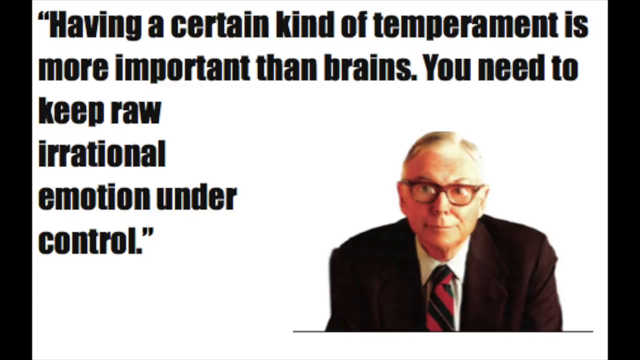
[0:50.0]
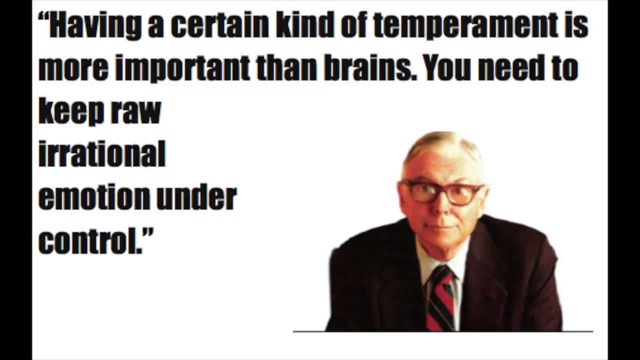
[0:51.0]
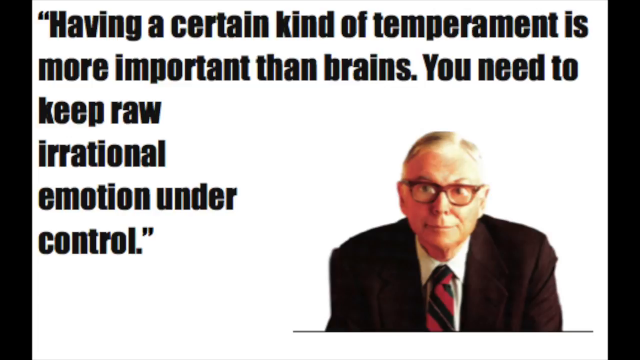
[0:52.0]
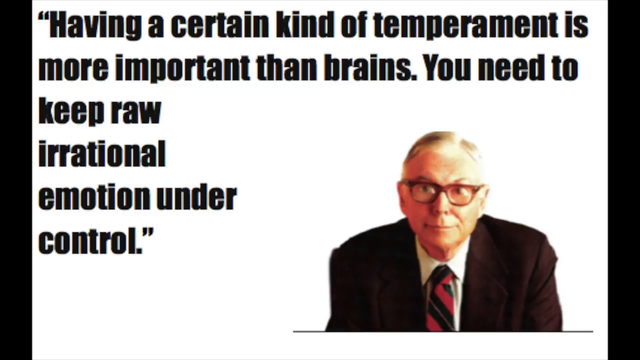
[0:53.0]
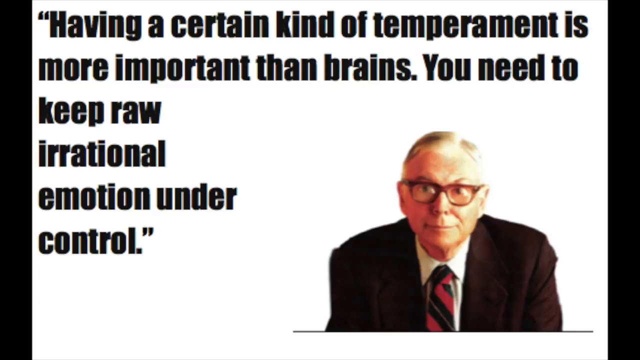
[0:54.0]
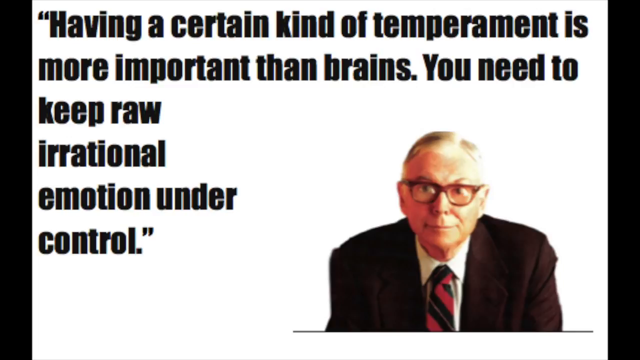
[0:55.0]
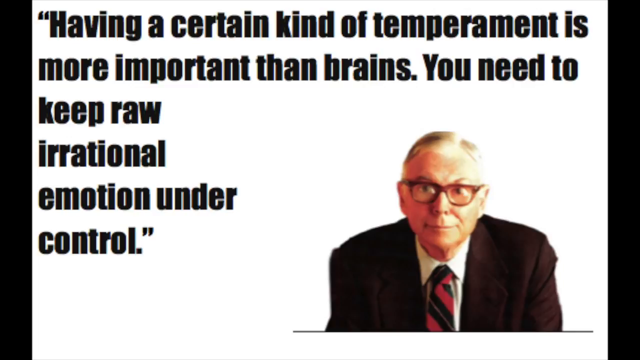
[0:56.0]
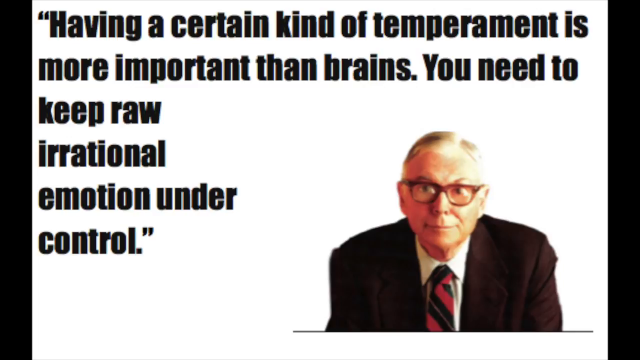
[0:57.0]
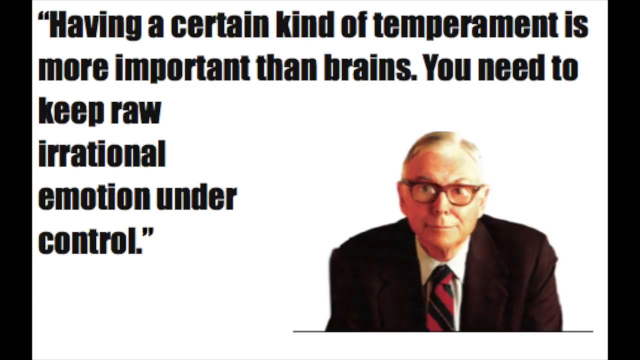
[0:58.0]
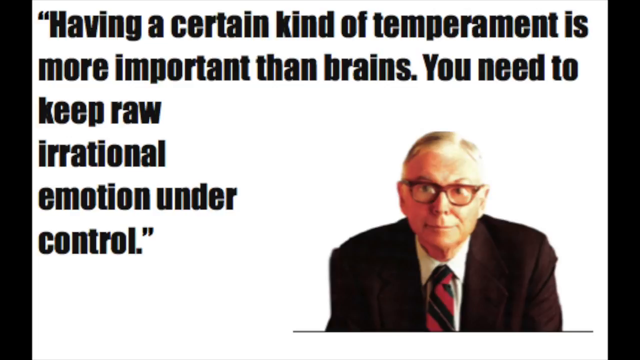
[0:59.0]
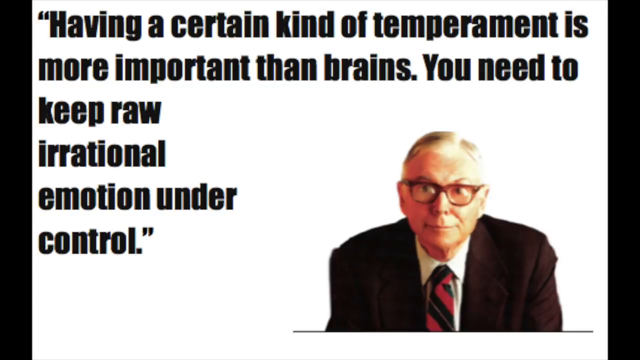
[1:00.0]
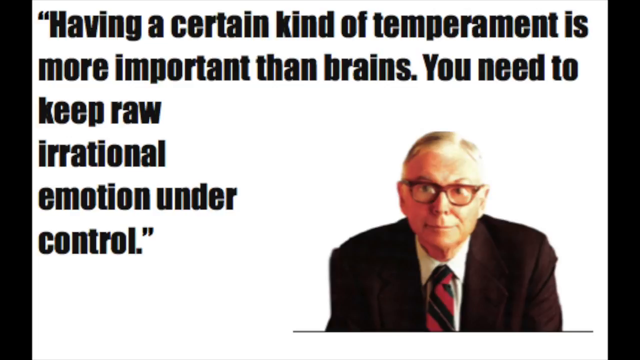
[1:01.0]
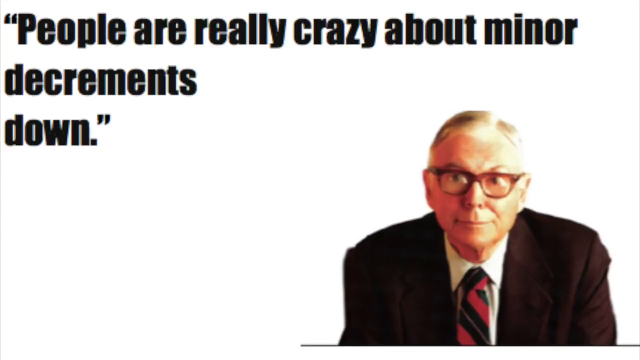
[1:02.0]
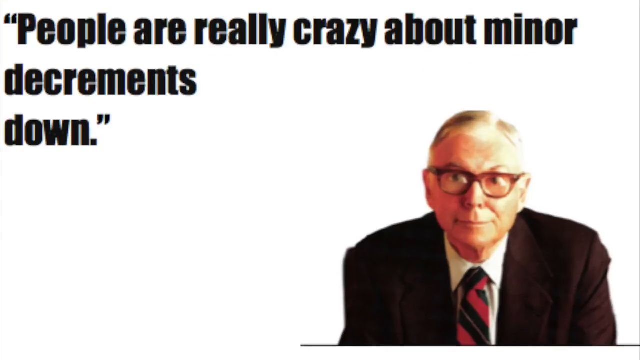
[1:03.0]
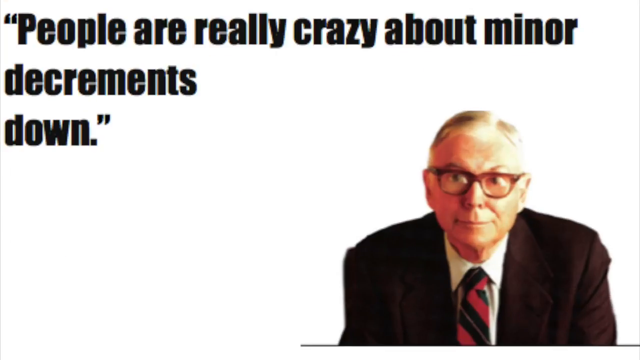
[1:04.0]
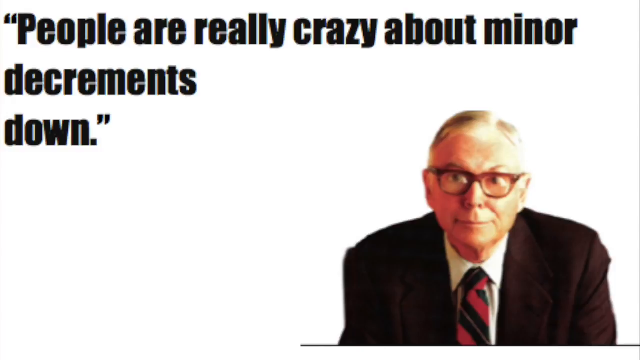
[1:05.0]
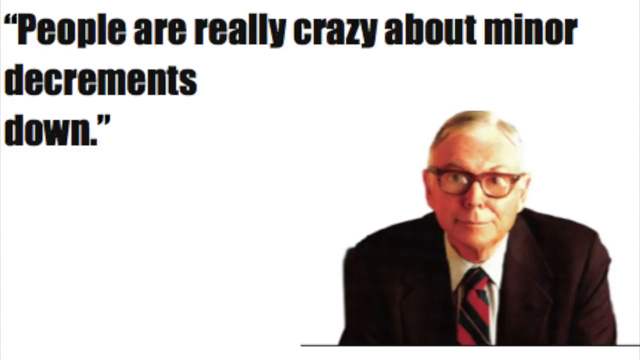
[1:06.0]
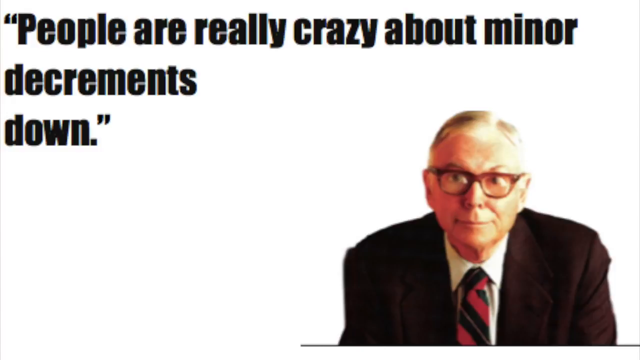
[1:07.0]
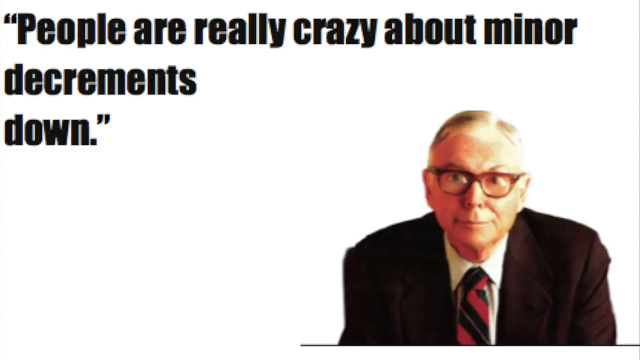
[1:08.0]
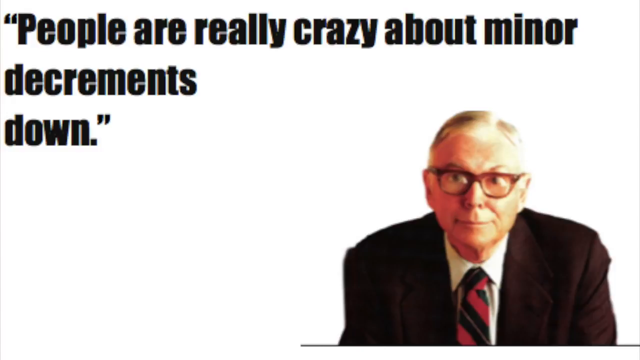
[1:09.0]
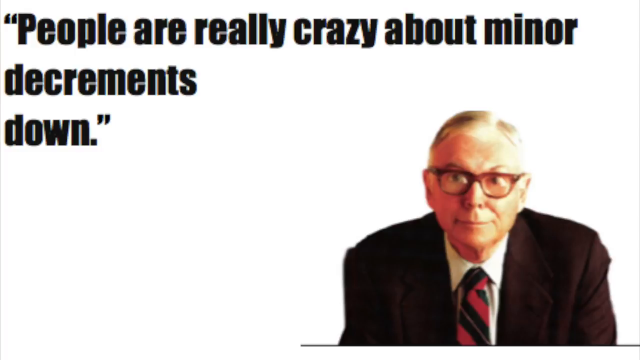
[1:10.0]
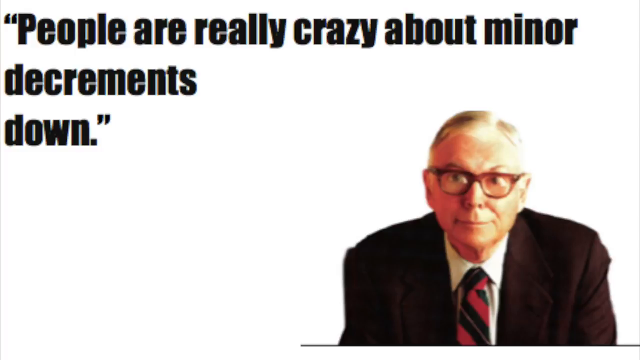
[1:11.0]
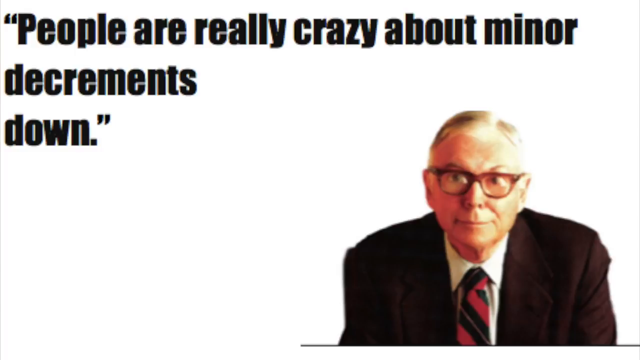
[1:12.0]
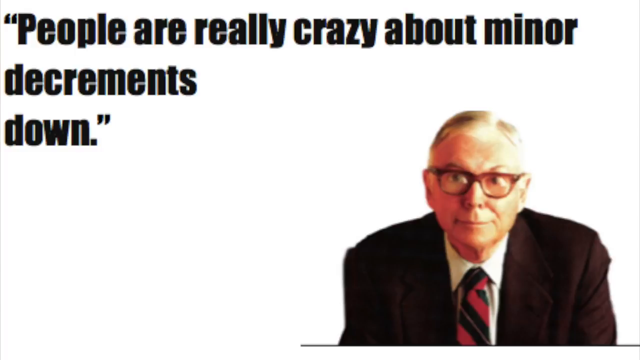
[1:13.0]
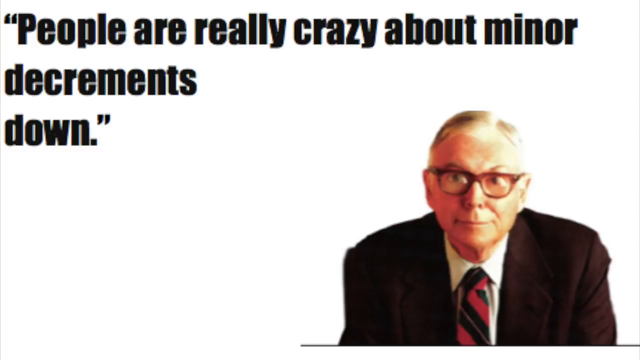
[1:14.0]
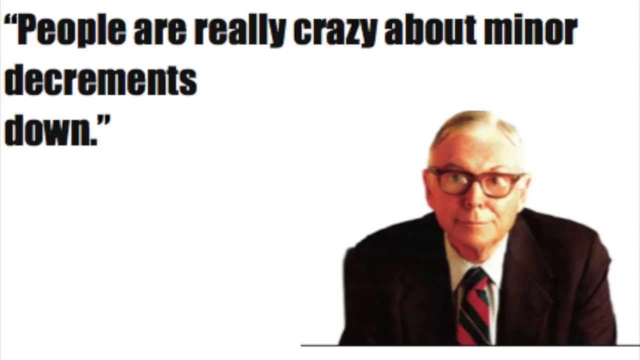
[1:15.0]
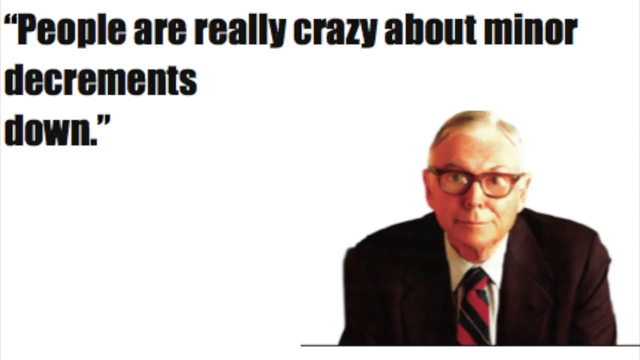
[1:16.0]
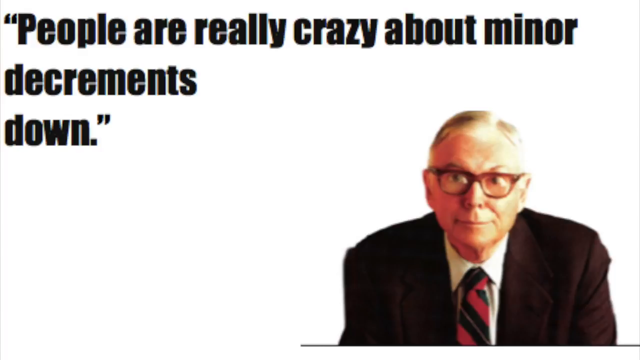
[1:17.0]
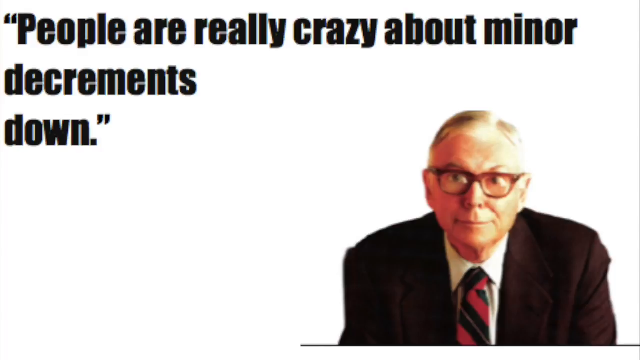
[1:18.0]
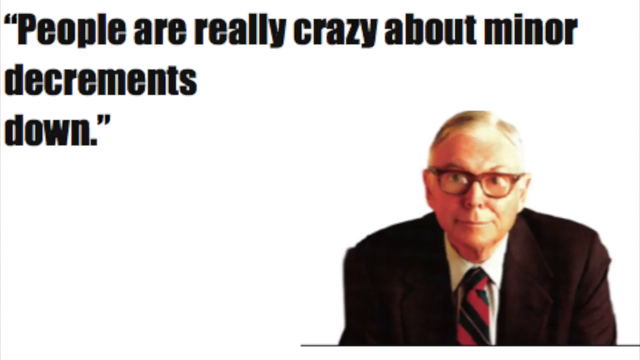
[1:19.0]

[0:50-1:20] The image shows an older man who looks condescending, with his hair parted to the side. His mouth is set in a somewhat know-it-all way, and he looks straight at the camera. He wears glasses that look reddish, a brownish red suit, a white shirt and a red and black striped tie. A message appears on the screen against a mostly white background and reads "having a certain kind of temperament is more important than brains," followed by a line beginning "You need to keep."